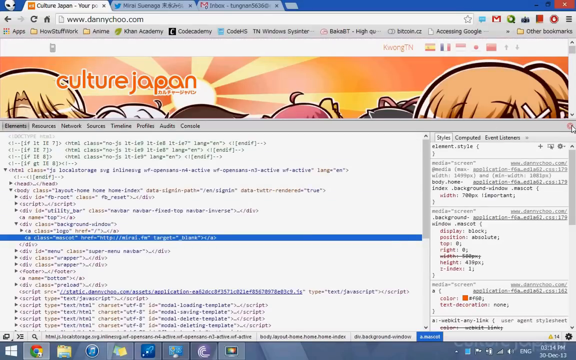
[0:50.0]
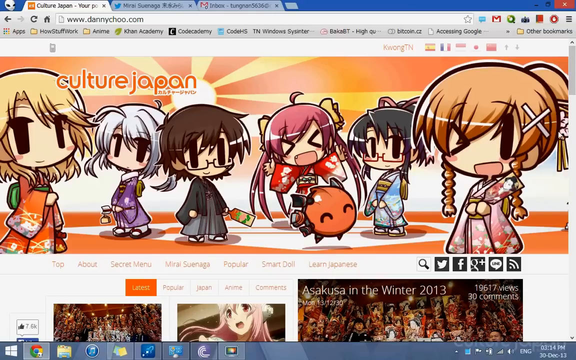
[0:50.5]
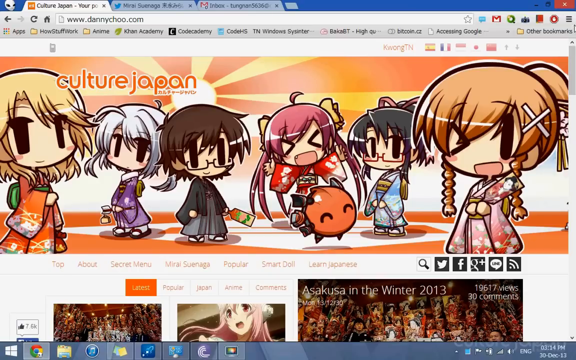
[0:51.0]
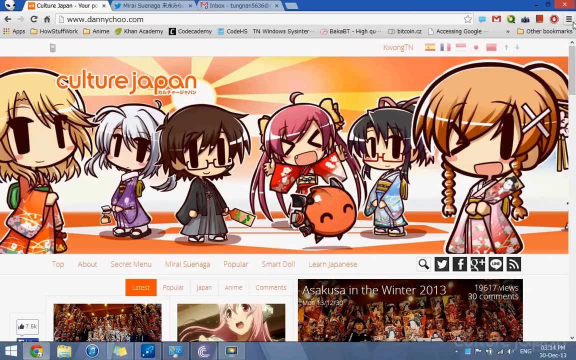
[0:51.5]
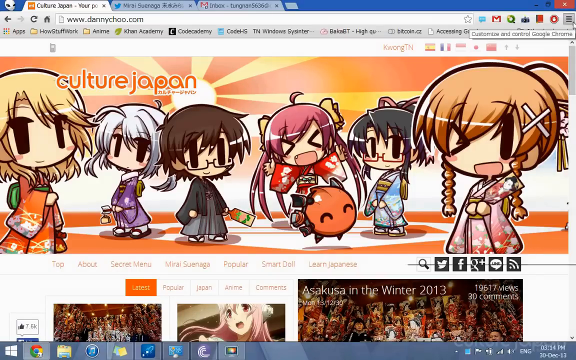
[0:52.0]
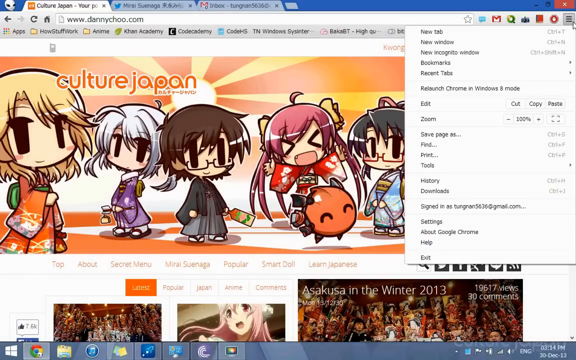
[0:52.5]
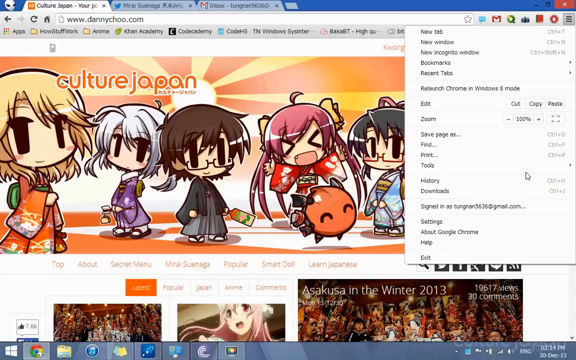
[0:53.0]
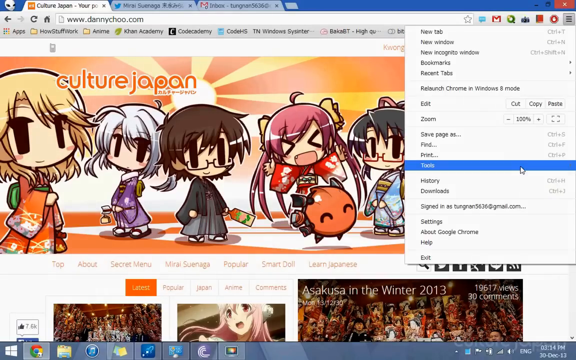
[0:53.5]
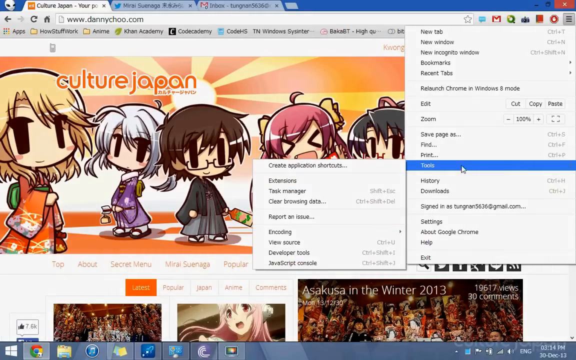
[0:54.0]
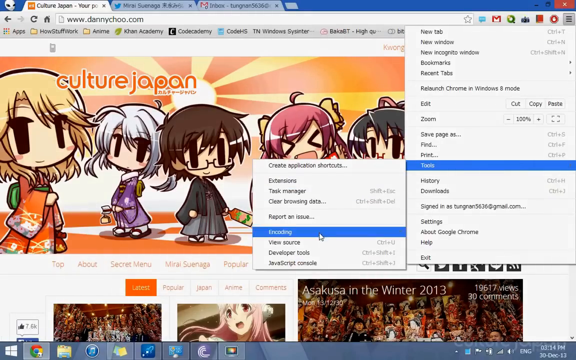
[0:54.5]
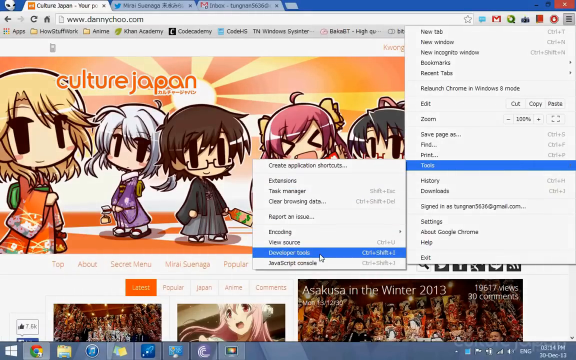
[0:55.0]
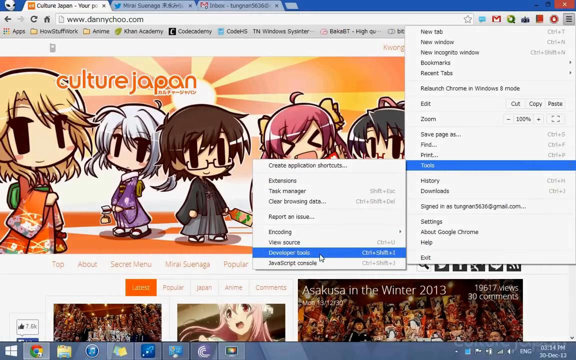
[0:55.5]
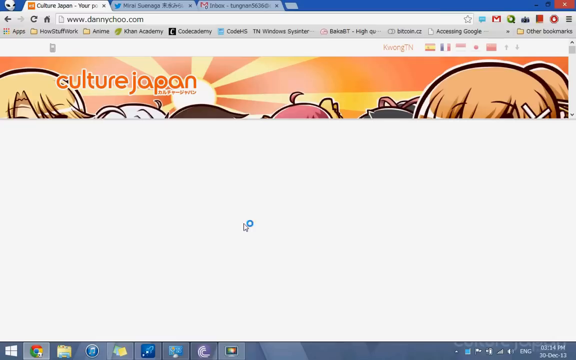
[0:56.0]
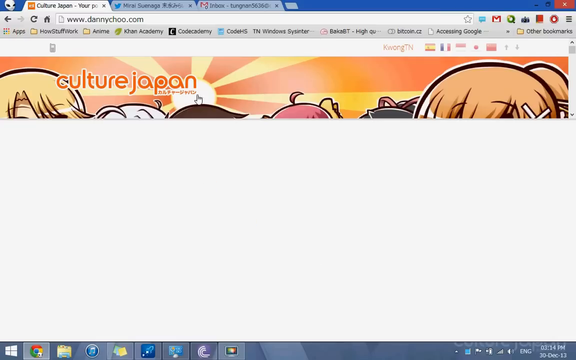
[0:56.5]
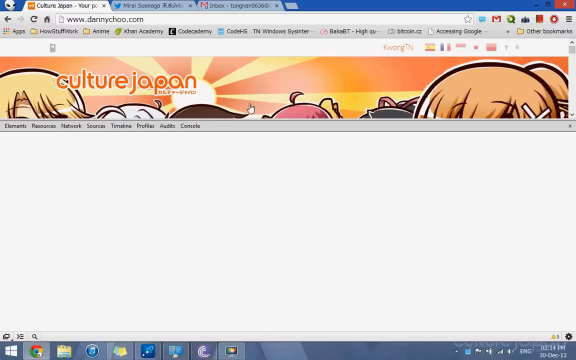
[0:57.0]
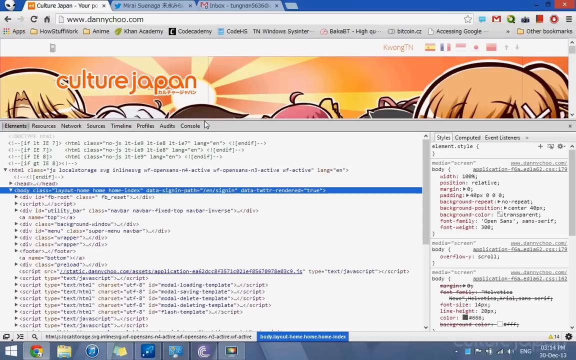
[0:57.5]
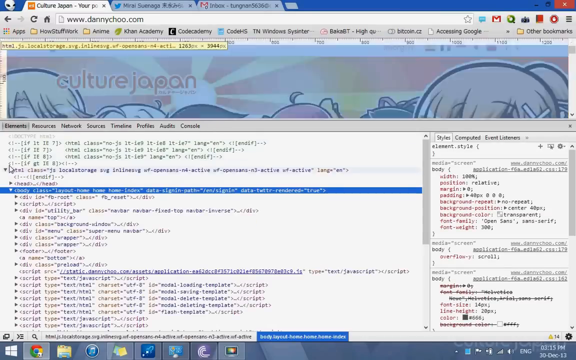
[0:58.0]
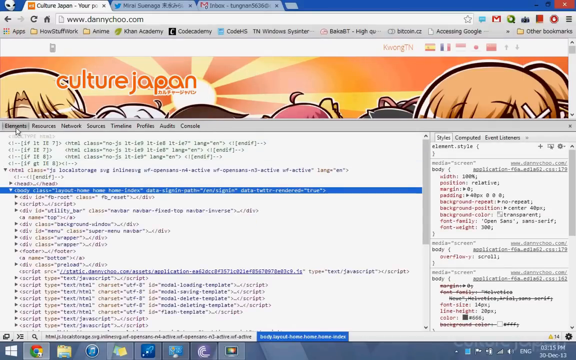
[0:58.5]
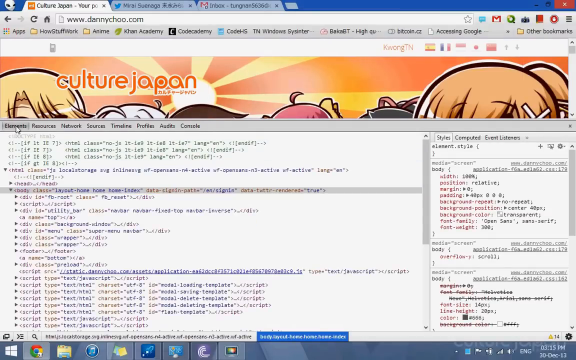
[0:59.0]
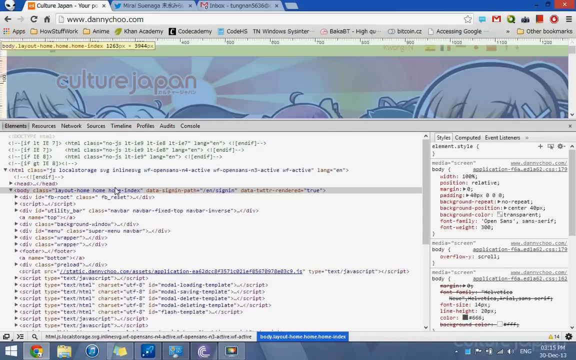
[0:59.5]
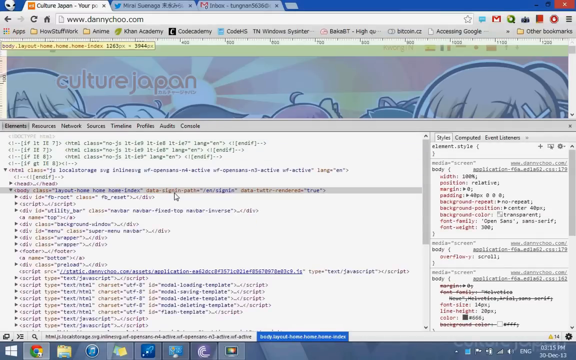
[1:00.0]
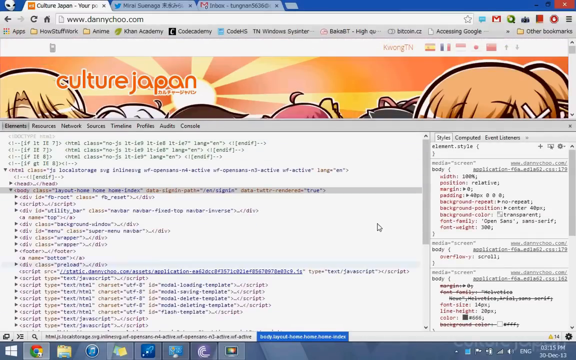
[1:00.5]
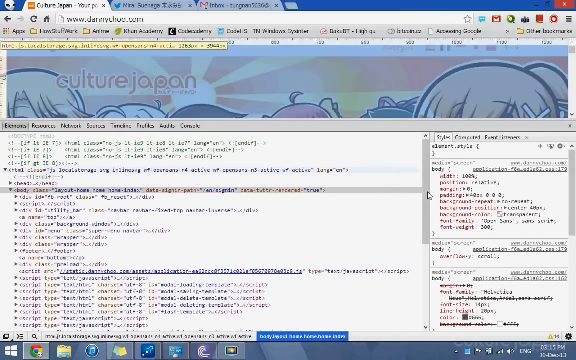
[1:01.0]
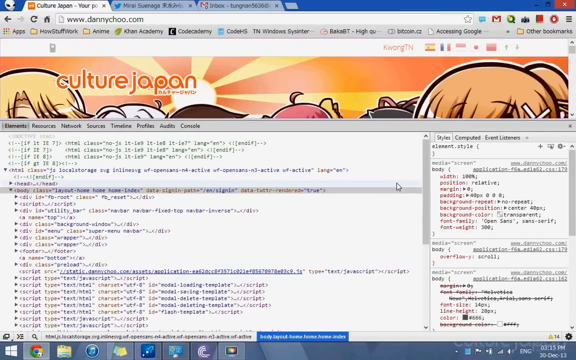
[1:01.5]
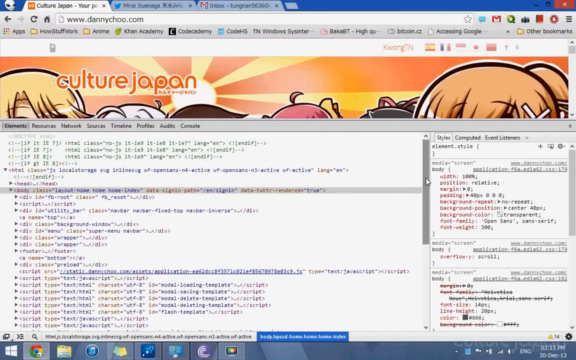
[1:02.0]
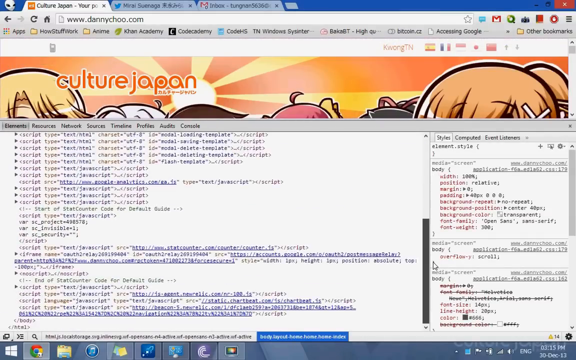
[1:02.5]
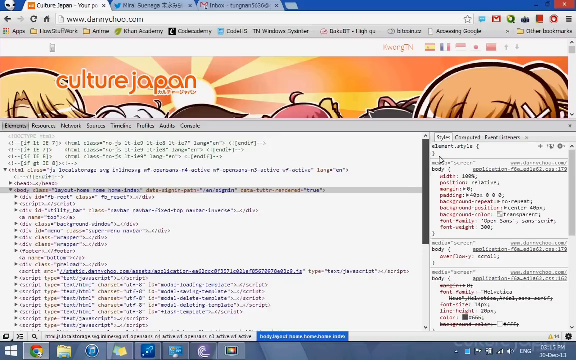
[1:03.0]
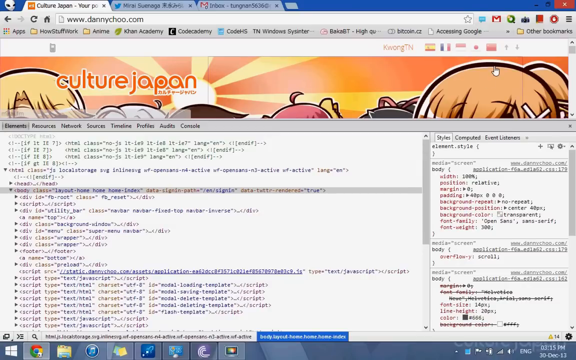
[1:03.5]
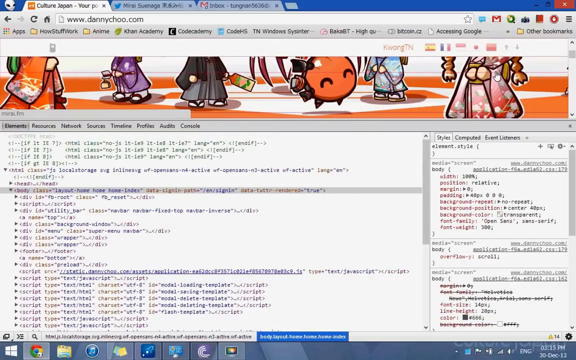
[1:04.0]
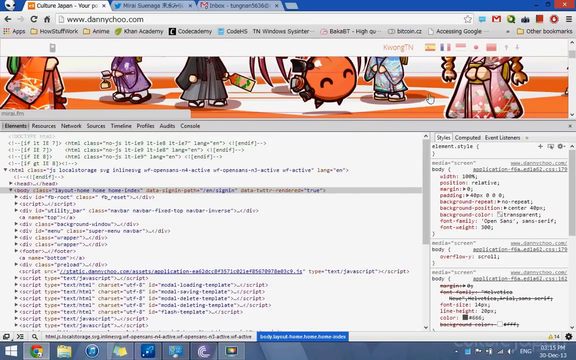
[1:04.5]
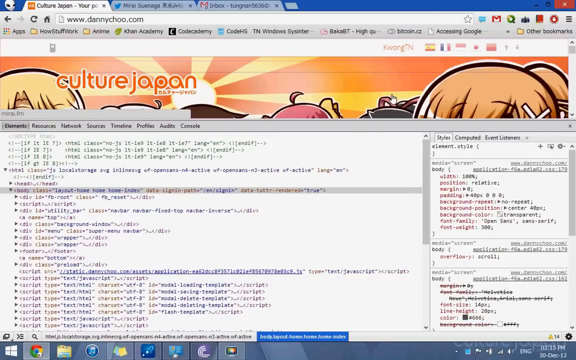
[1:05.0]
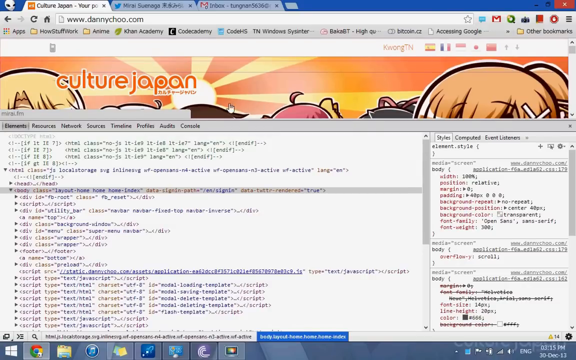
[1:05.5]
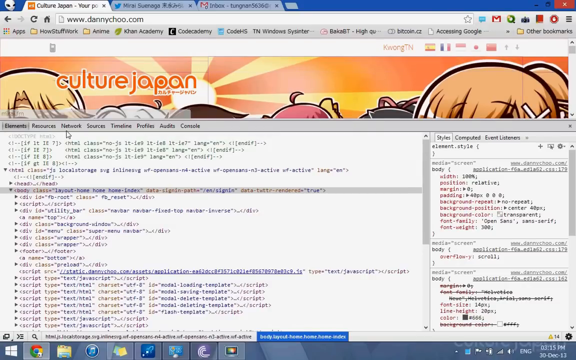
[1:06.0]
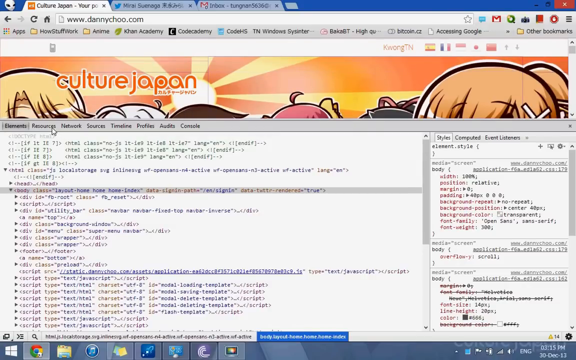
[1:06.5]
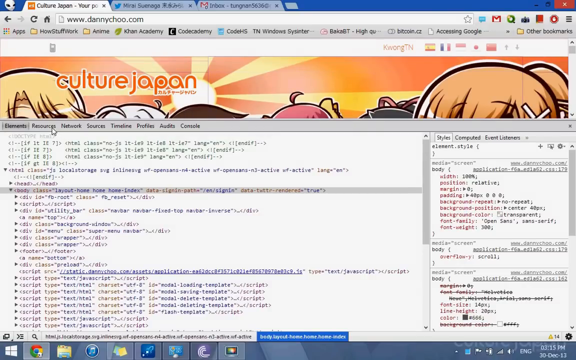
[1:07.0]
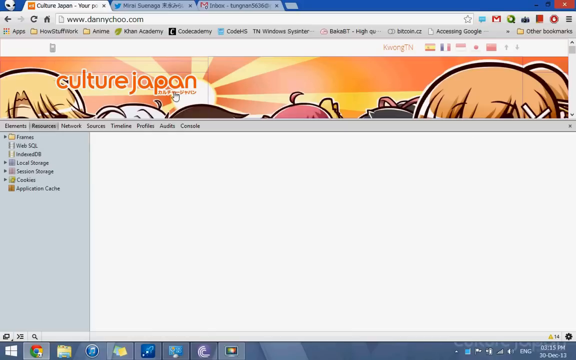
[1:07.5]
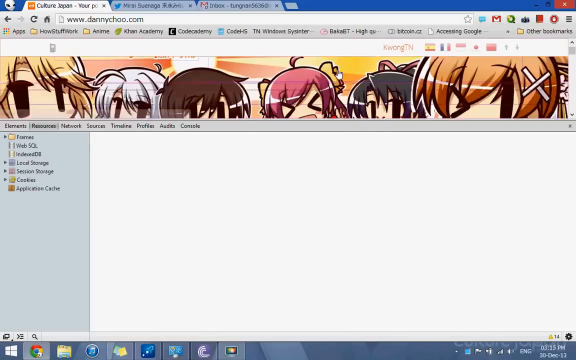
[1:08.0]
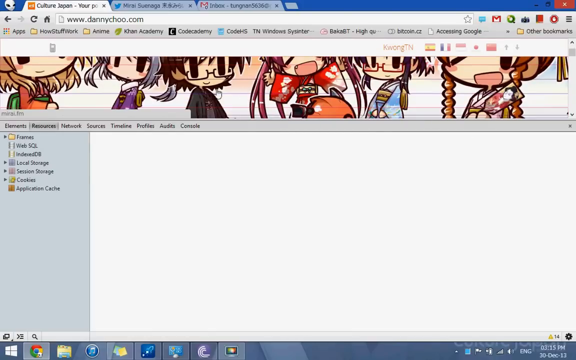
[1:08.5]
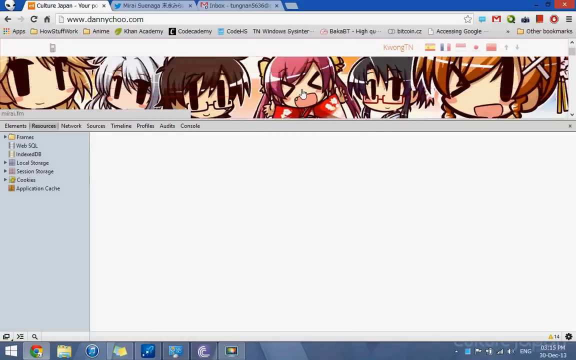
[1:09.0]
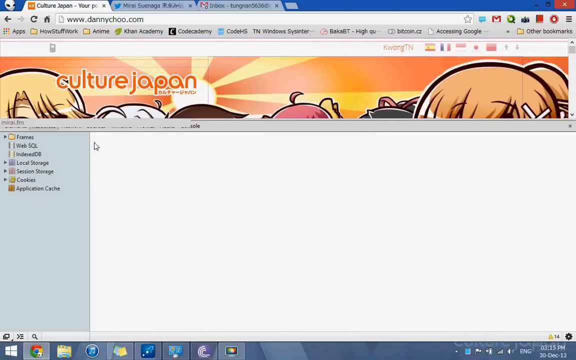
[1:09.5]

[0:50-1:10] The element box apparently closes. The cursor goes to the top right corner and clicks a menu, selecting "Tools" and then "Developer tools", and the element box comes up again, showing layout information such as width, position and margin. As the developer tools elements are scrolled up and down, different parts of the website's heading get highlighted, showing its different components, such as the text and the anime characters. Most of the text is in English, but beneath "Culture Japan" are some small Japanese characters.